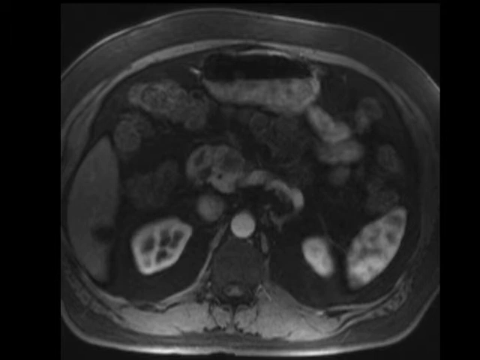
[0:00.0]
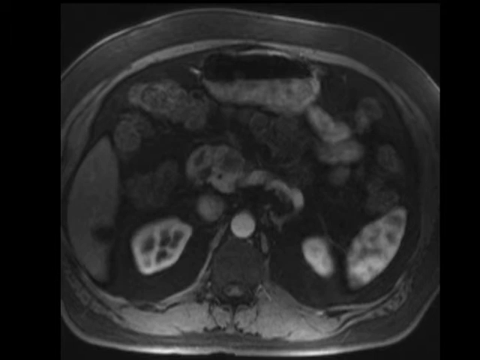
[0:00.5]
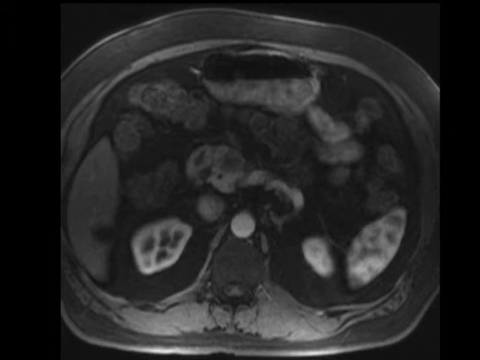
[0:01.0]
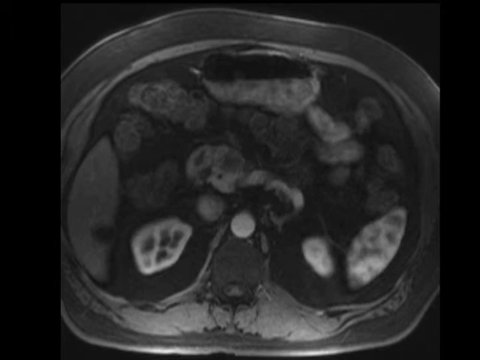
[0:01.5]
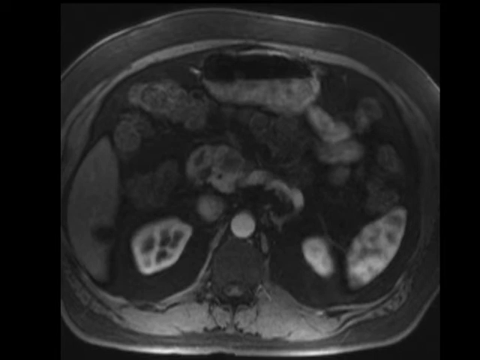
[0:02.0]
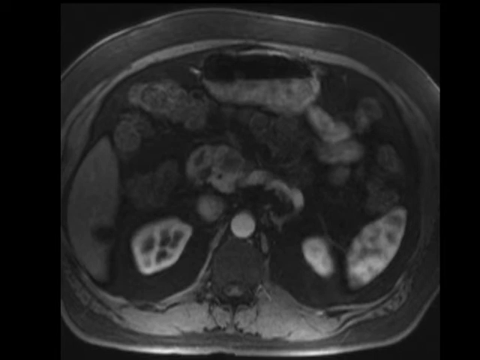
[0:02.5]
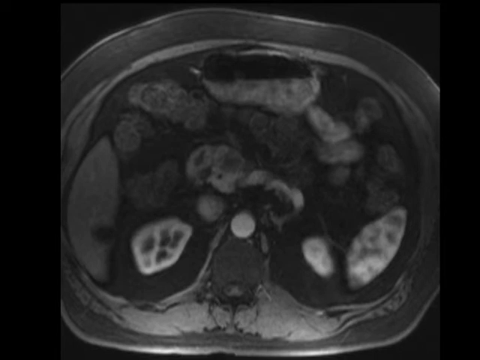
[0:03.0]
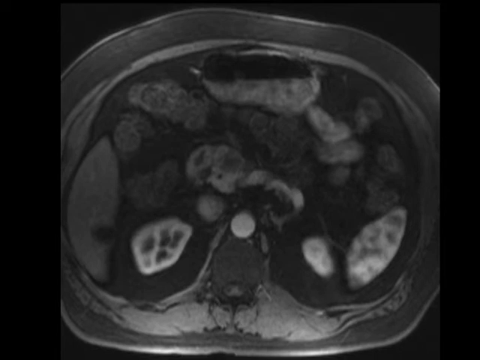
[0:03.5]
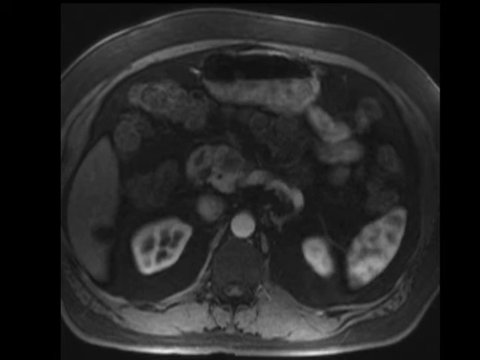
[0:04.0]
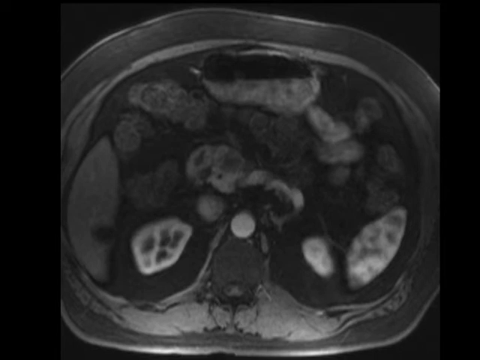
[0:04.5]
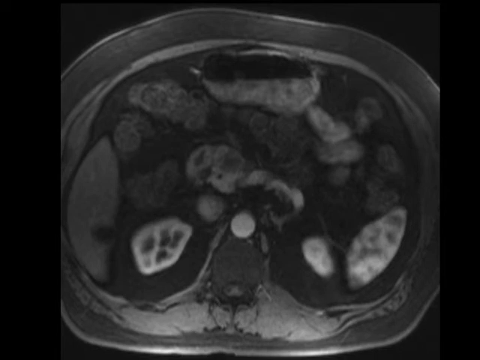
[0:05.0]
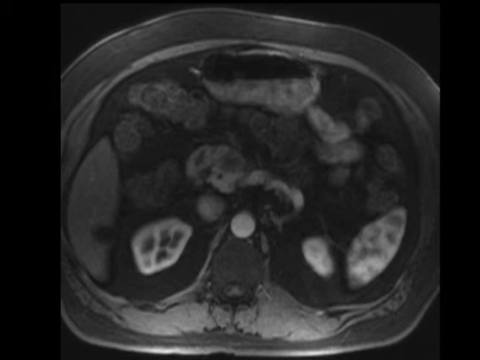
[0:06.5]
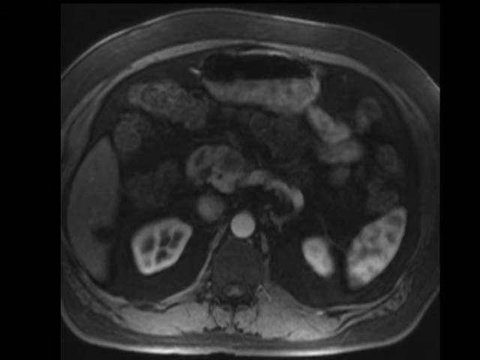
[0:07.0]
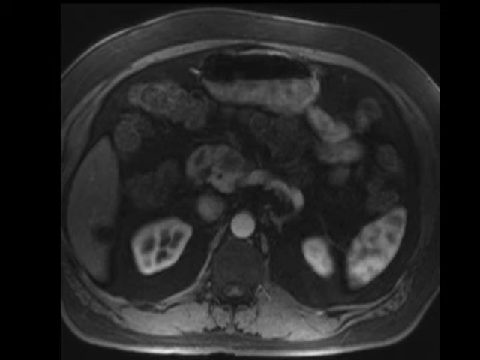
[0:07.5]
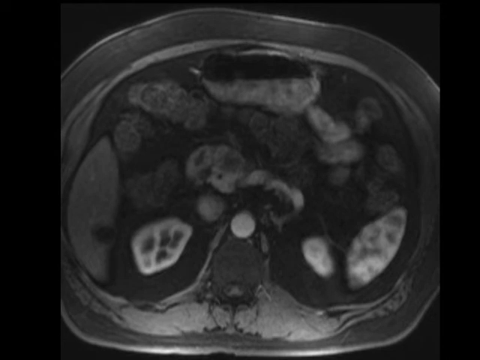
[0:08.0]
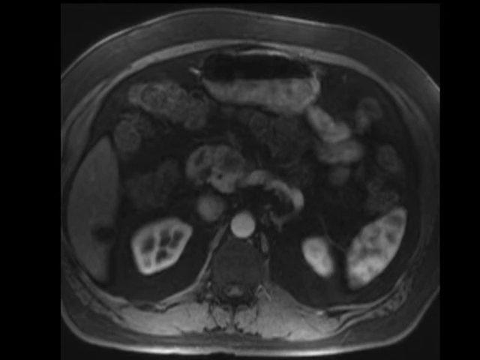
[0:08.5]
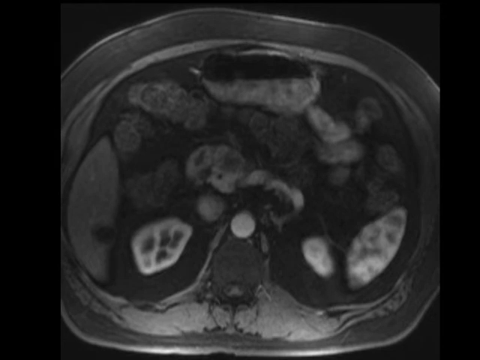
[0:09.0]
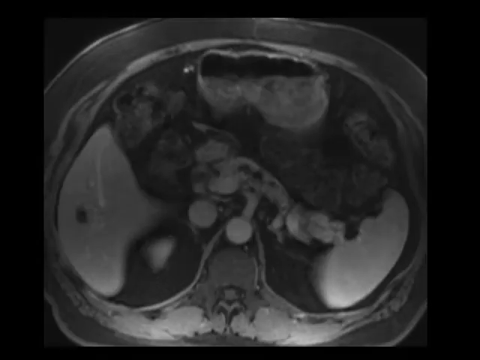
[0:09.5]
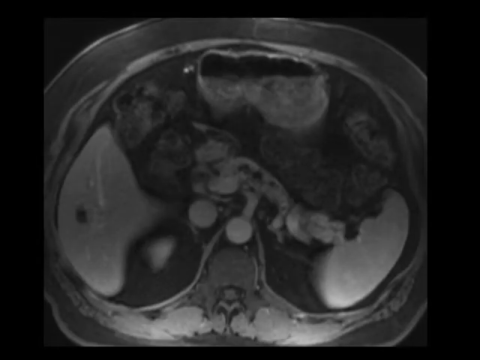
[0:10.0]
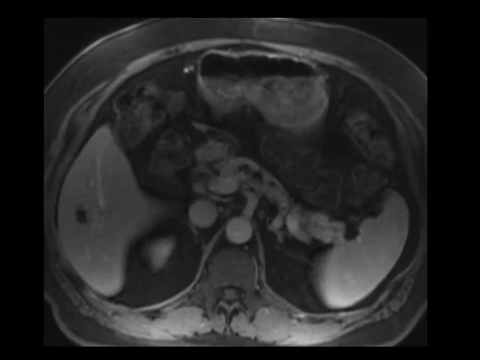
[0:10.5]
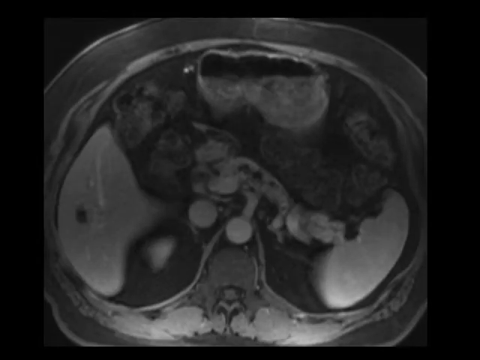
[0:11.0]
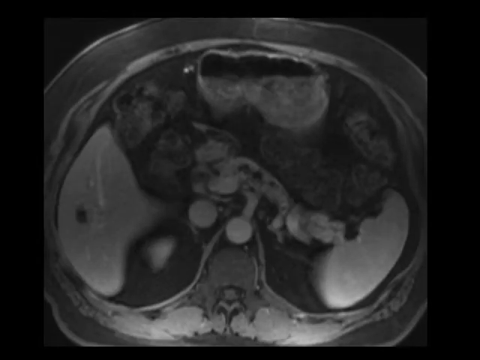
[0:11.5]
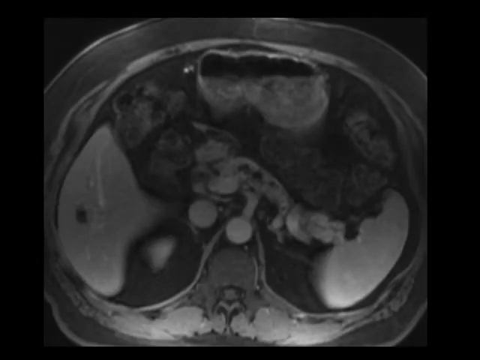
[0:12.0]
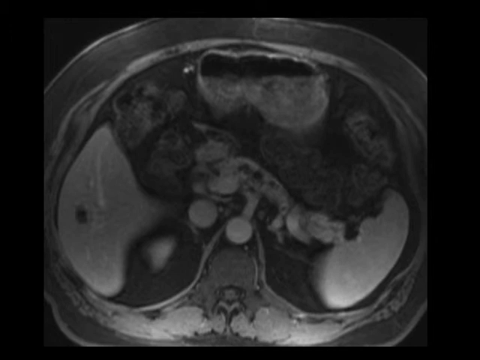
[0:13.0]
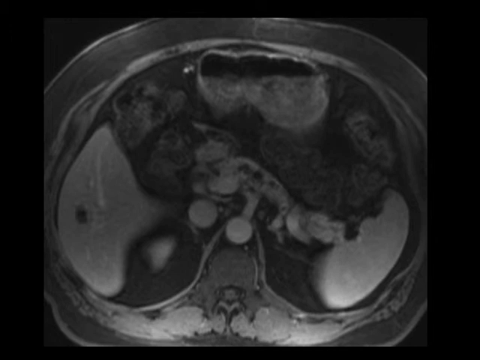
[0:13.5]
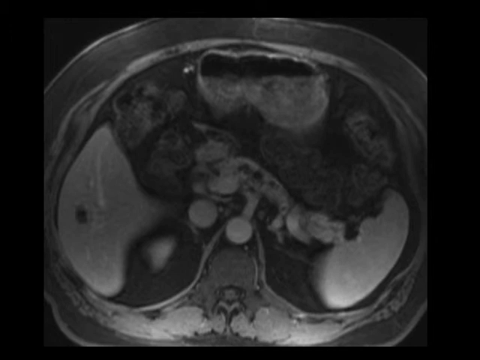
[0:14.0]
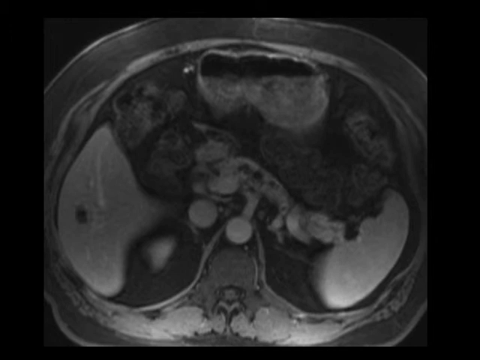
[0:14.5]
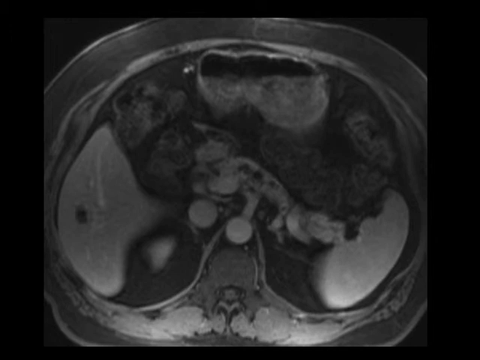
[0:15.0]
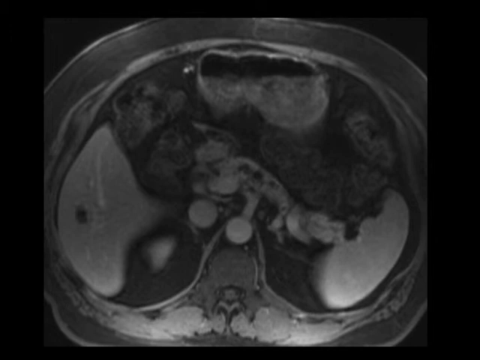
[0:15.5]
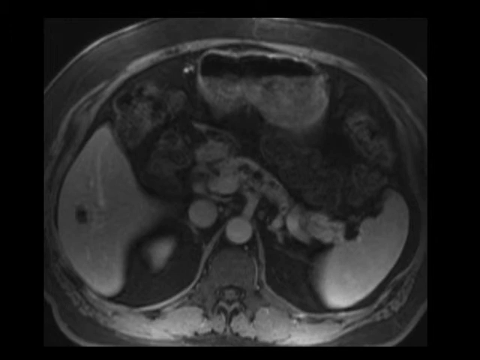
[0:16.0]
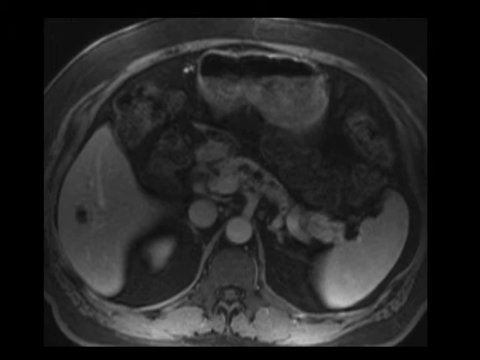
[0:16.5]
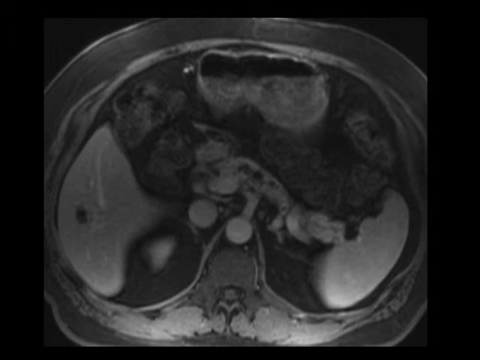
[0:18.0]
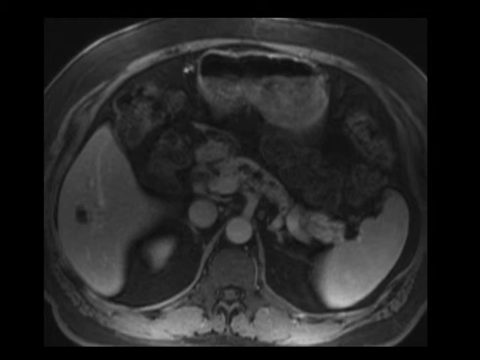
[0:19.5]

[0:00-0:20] The video shows a mostly still image of some sort of organ in the body. A gray, rounded, sort of egg-shaped shape contains many varying gray objects, about 14 or maybe 15 of them. The area might be an abdomen; it does not seem to be the brain, and it may not even be human. Partway through, the image changes: the object on the left is now very whitish, while the right and top look the same. Some of the objects seem inflamed and enlarged, perhaps showing some kind of fat or health defect. The image stays on this scene for the rest of the shot.